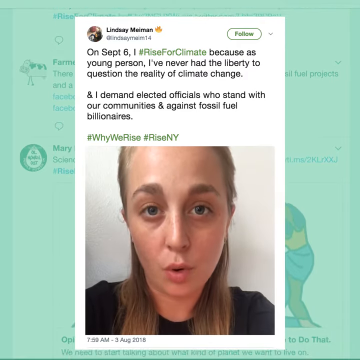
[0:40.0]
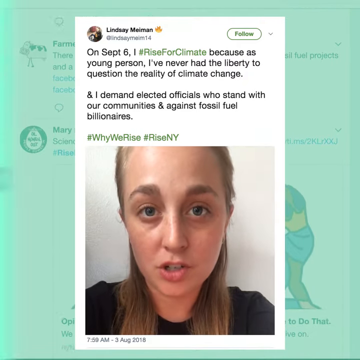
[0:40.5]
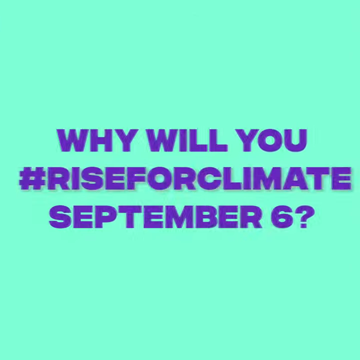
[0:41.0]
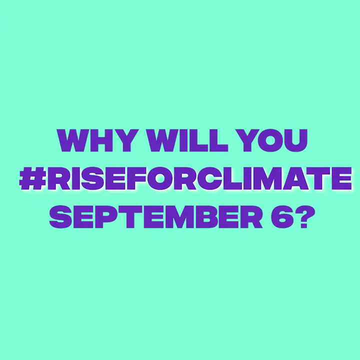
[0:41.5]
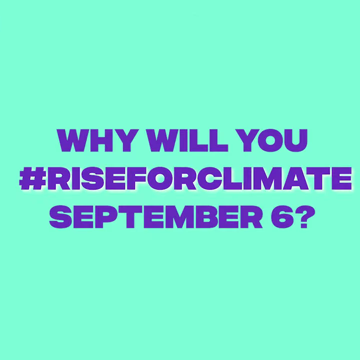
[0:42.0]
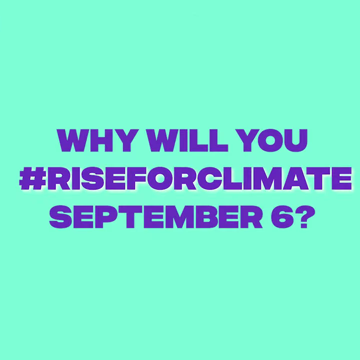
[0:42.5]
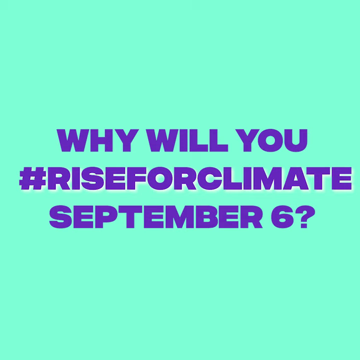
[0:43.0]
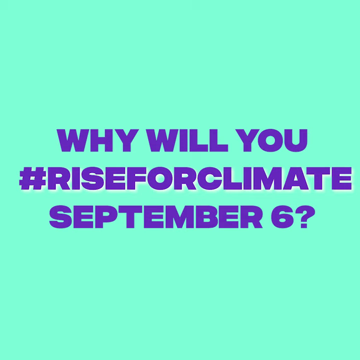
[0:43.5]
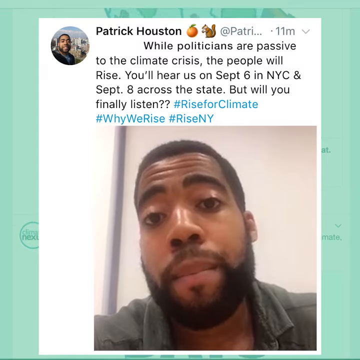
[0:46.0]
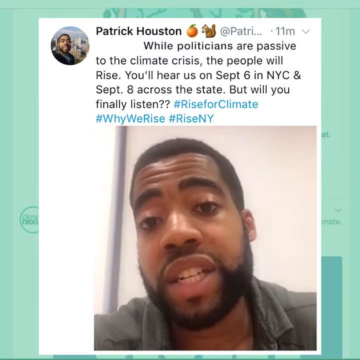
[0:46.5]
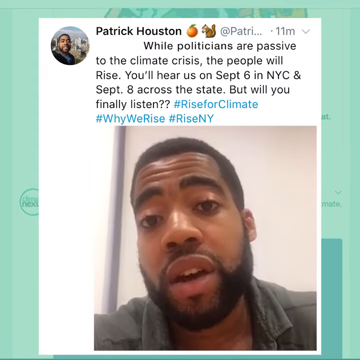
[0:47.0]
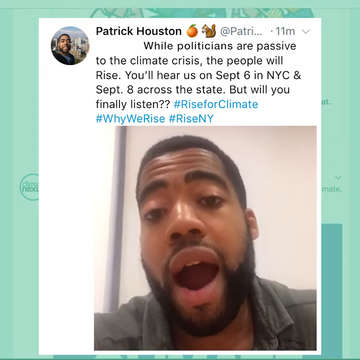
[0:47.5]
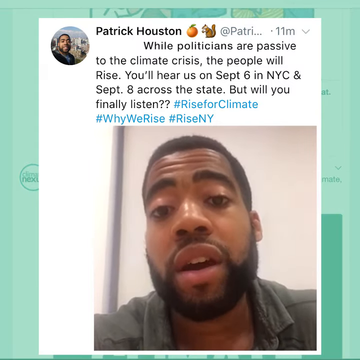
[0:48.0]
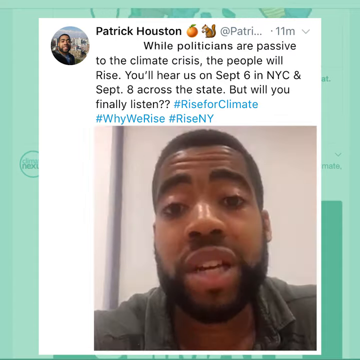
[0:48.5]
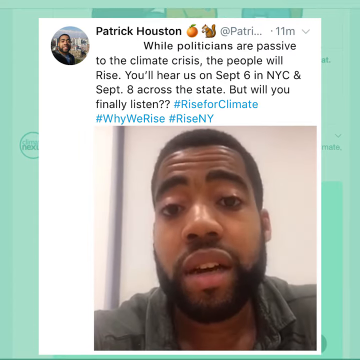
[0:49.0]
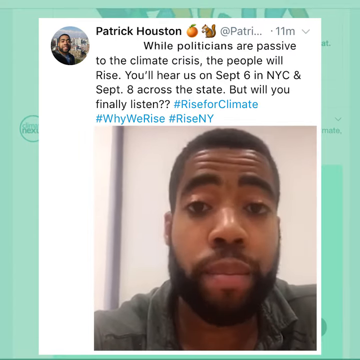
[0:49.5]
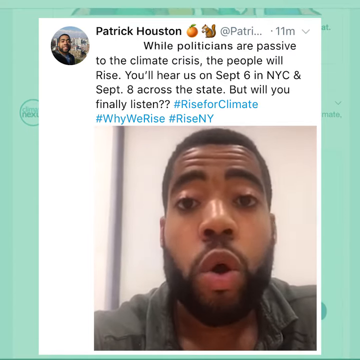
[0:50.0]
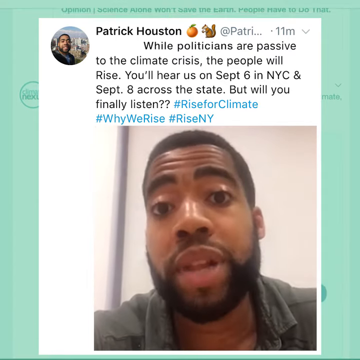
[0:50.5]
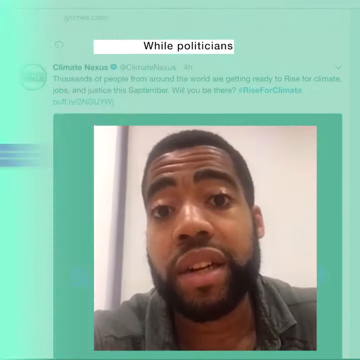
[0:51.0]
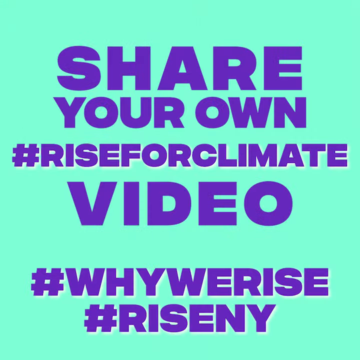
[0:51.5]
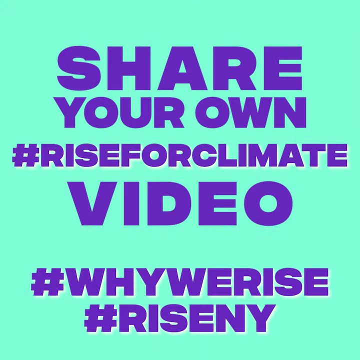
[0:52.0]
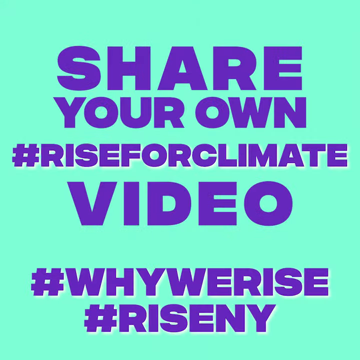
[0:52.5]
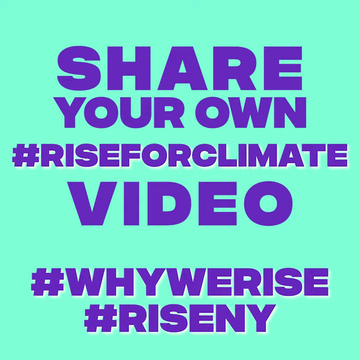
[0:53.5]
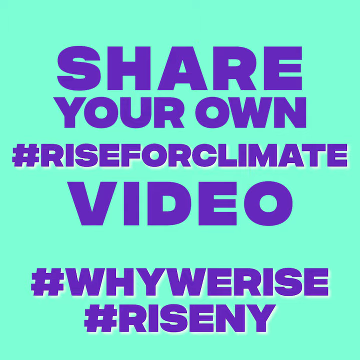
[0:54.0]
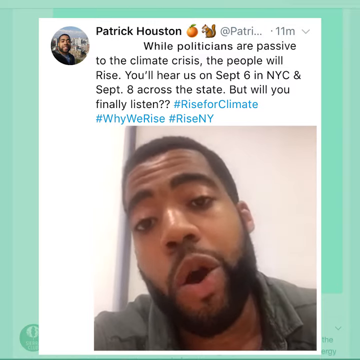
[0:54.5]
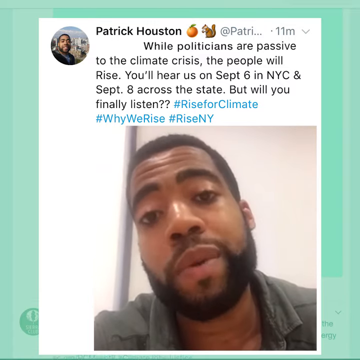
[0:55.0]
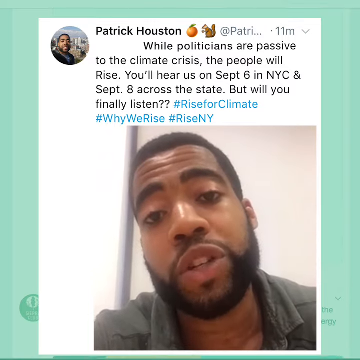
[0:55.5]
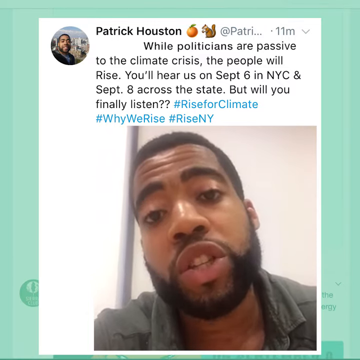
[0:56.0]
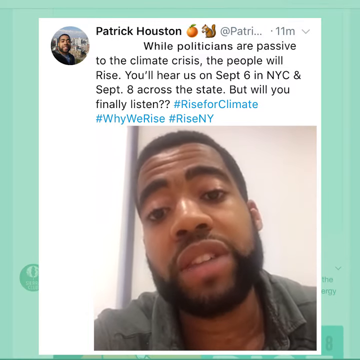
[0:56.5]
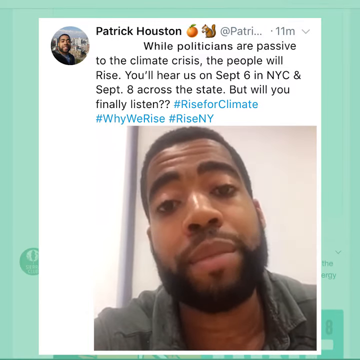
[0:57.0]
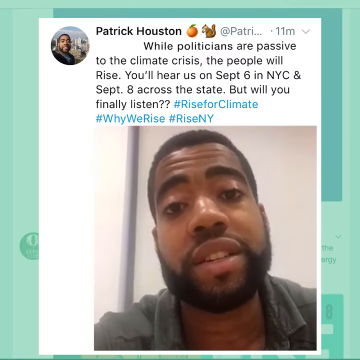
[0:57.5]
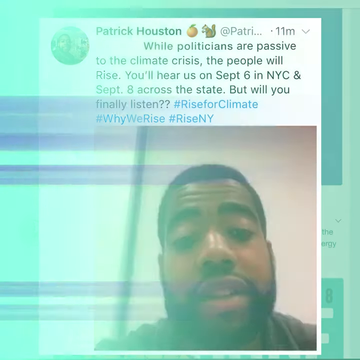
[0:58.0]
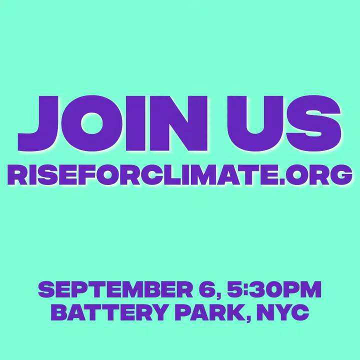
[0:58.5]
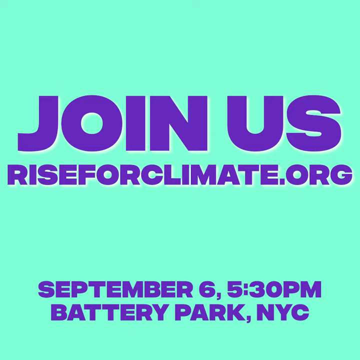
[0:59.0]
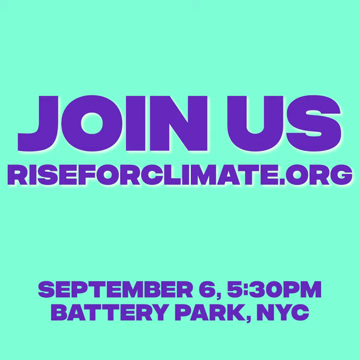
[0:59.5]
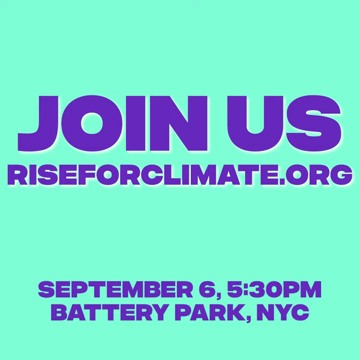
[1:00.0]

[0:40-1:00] "#rise4climate September 6th" appears. A tweet from Patrick Houston reads "While politicians are passive to the climate crisis, the people will rise. You will hear us on September 6th in New York and September 8th across the state. But will you finally see? #rise4climate #why we rise #rise New York." A tweet from another guy reads "Share your own #rise. Join us, rise4climate.org September 6th, half past 5 p.m. Battery Park, New York City." A reply from Jerome Nathania reads "I'm rising on September 6th because people of color are disproportionately affected by climate change. #rise for climate #why we rise." Everyone seems to have their own reason to rise.